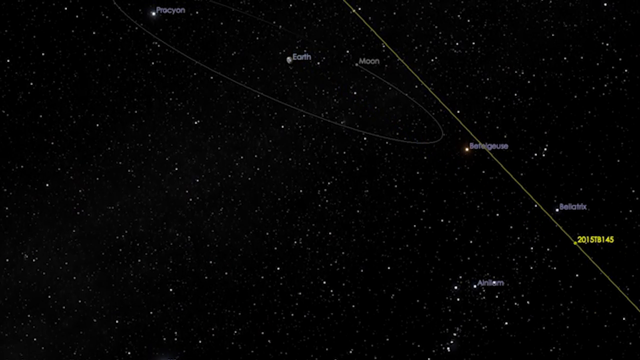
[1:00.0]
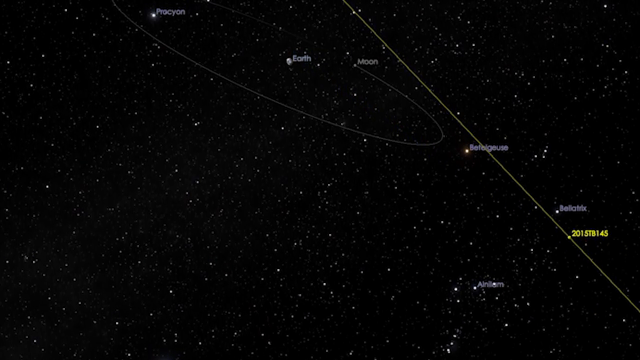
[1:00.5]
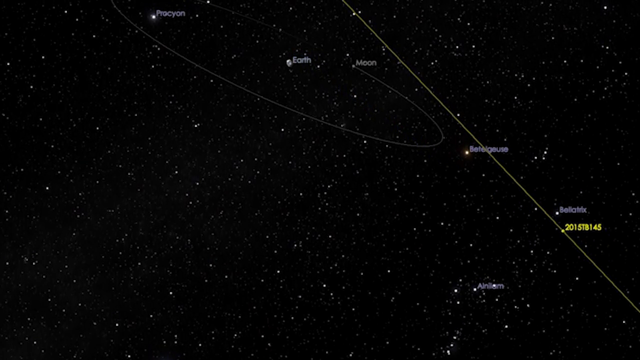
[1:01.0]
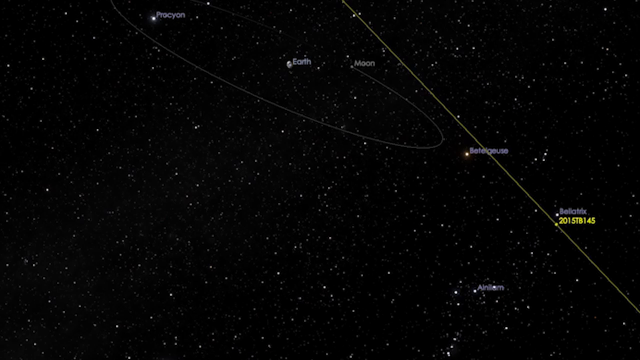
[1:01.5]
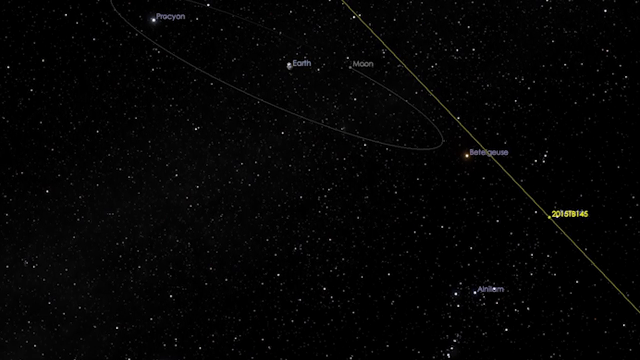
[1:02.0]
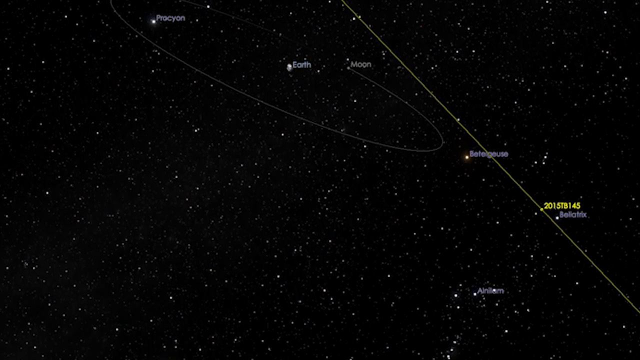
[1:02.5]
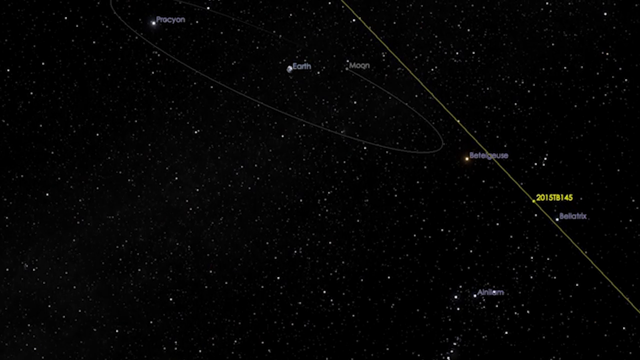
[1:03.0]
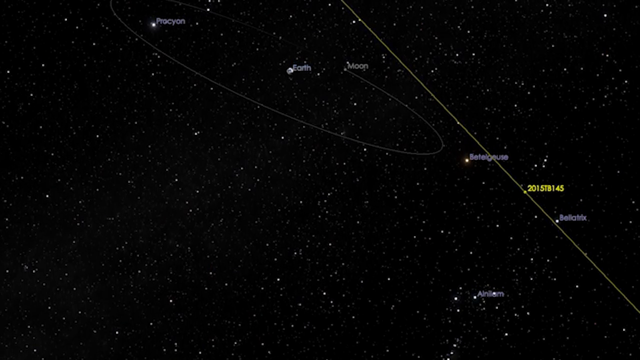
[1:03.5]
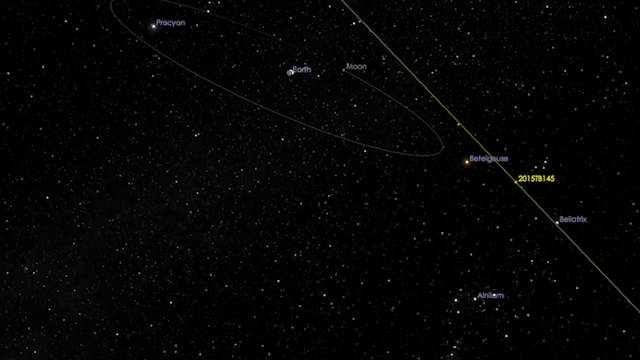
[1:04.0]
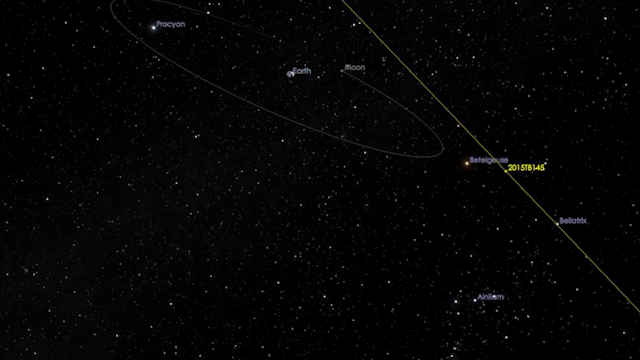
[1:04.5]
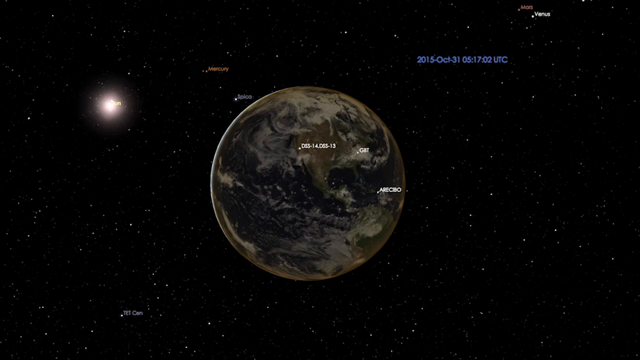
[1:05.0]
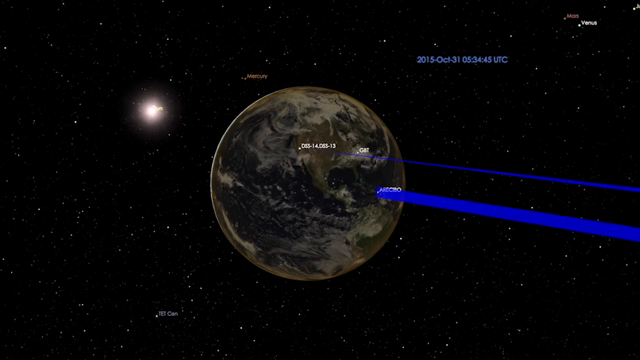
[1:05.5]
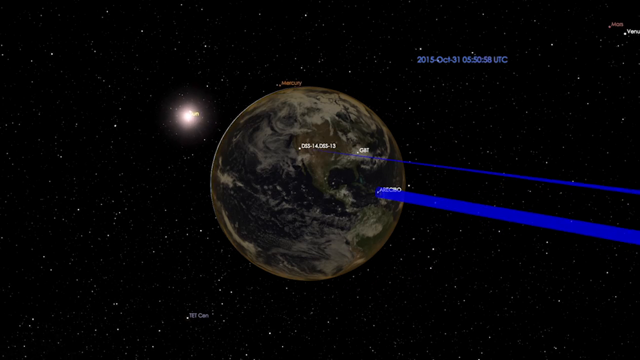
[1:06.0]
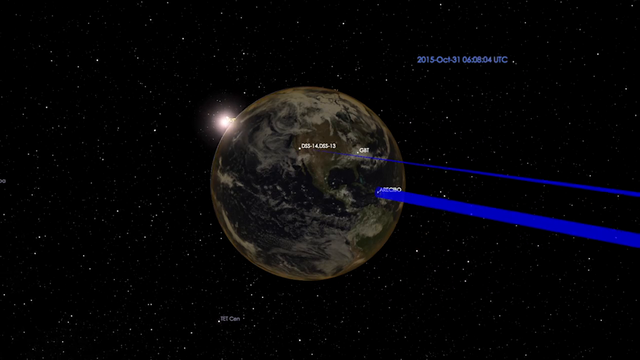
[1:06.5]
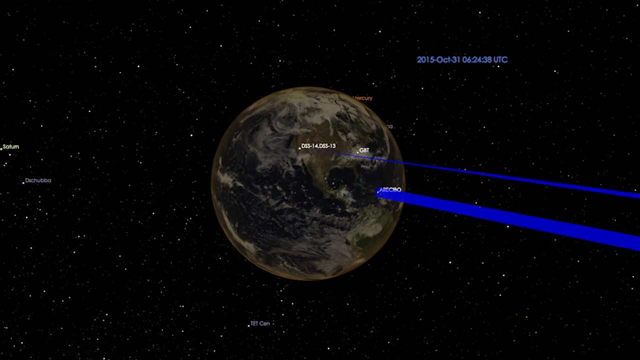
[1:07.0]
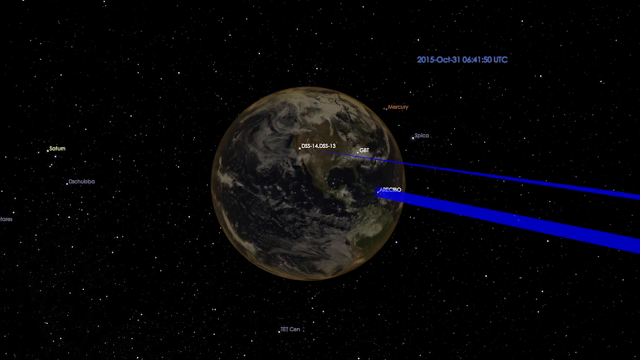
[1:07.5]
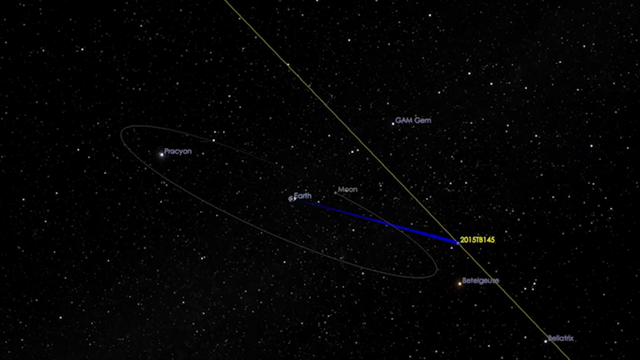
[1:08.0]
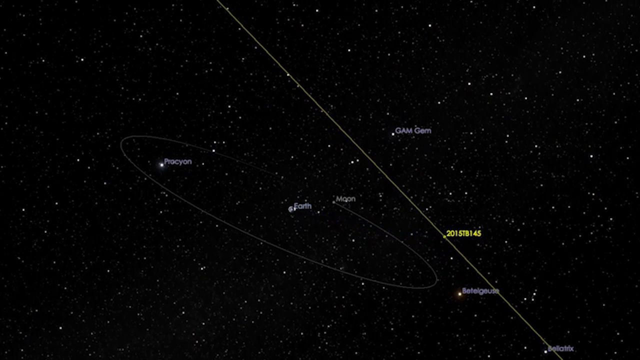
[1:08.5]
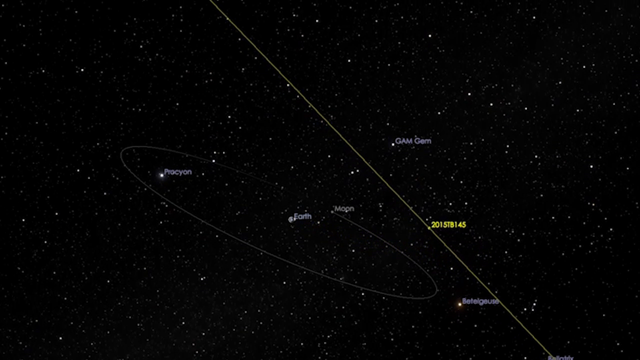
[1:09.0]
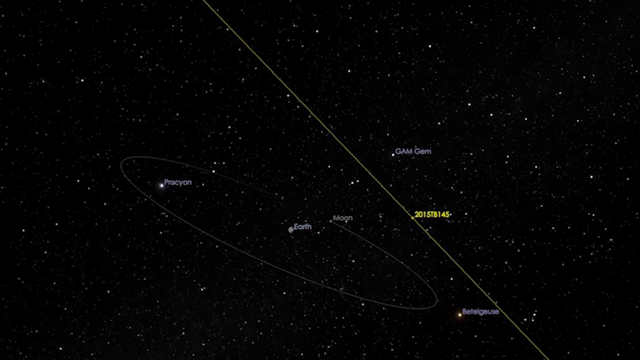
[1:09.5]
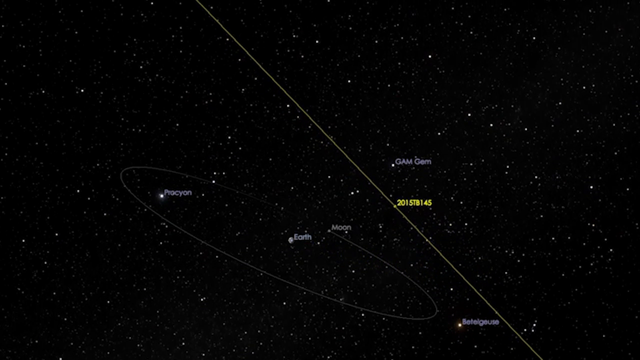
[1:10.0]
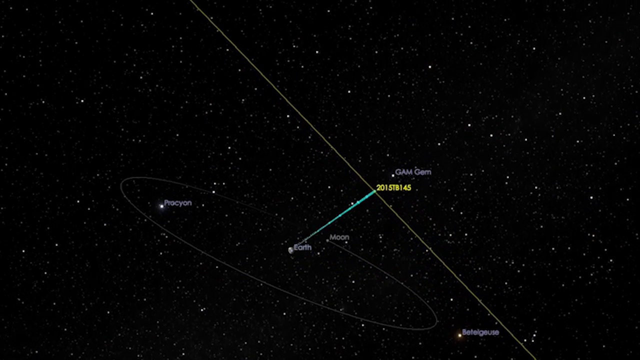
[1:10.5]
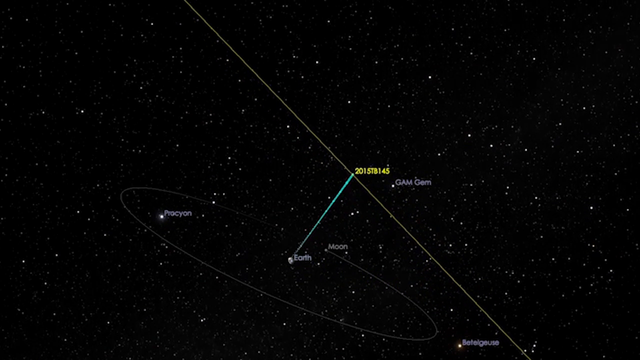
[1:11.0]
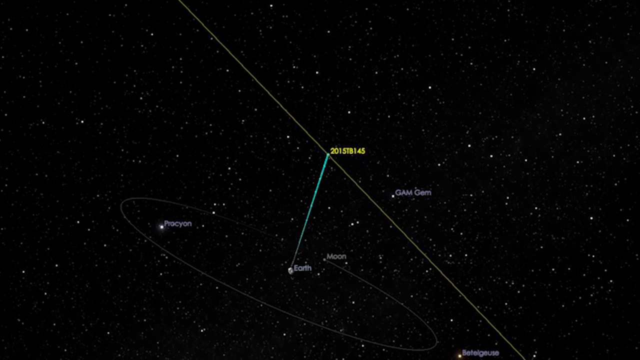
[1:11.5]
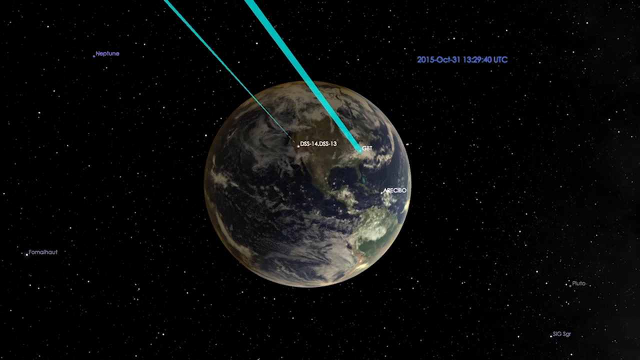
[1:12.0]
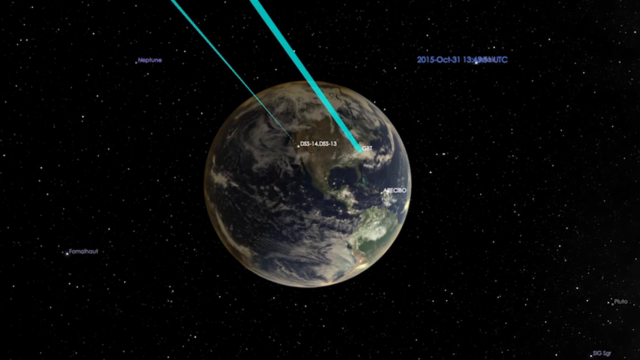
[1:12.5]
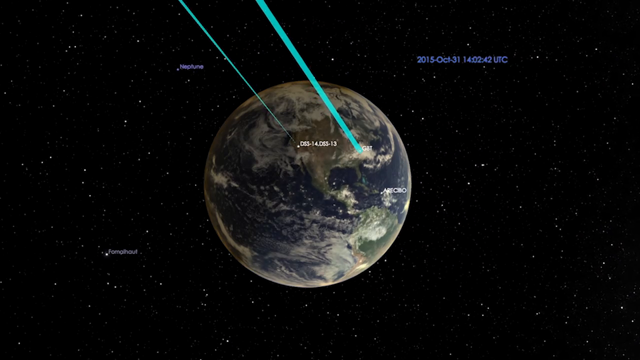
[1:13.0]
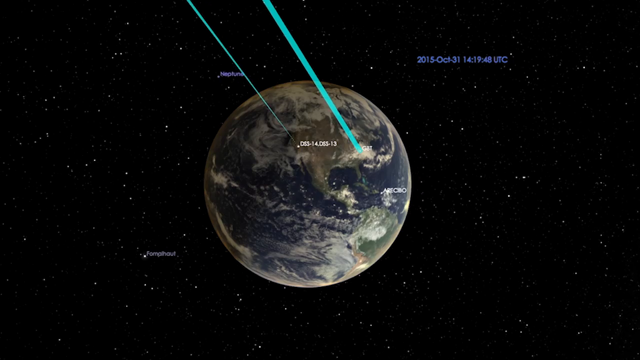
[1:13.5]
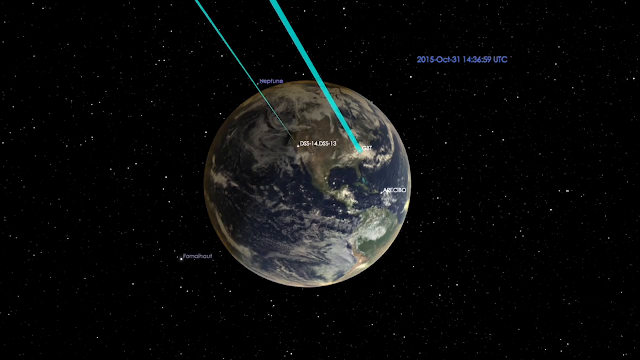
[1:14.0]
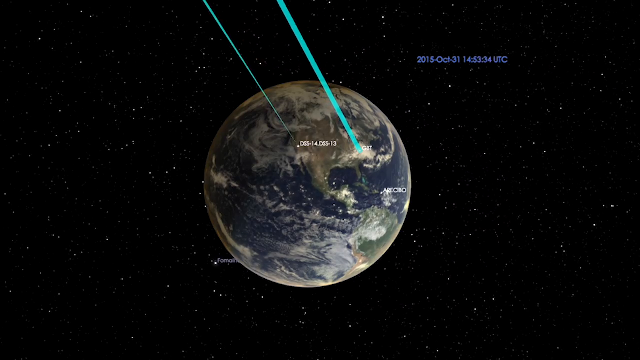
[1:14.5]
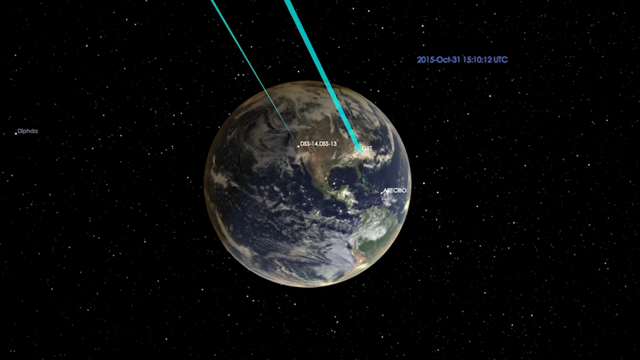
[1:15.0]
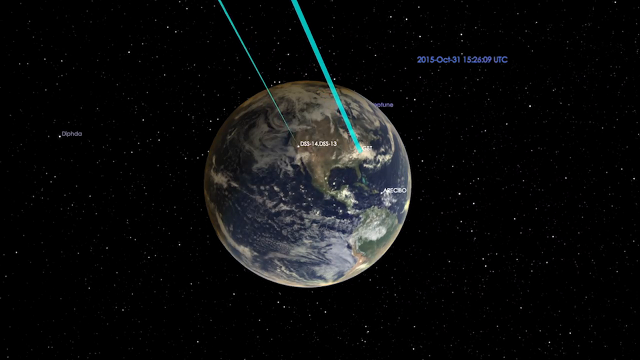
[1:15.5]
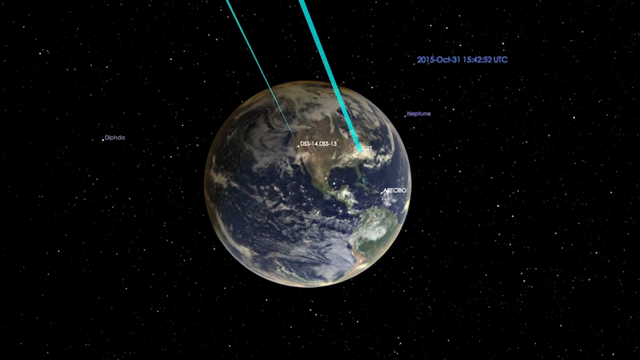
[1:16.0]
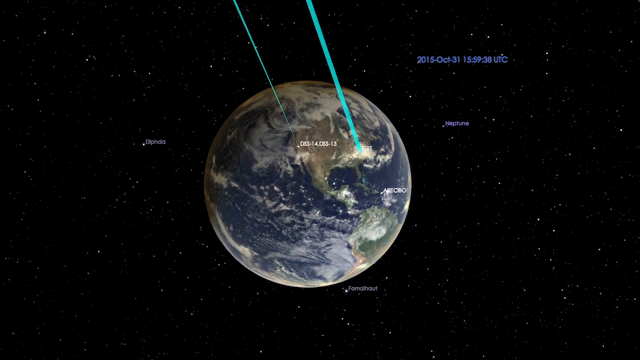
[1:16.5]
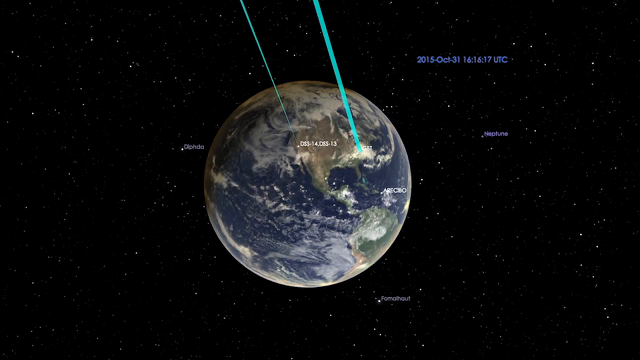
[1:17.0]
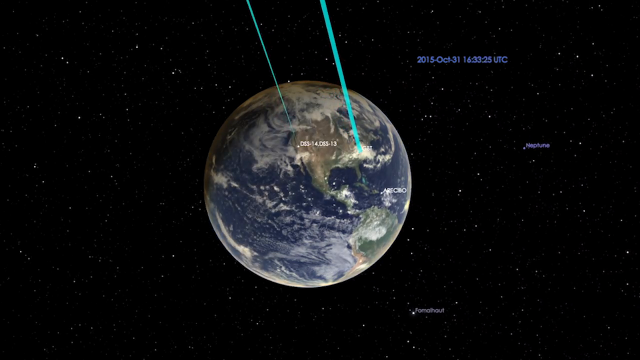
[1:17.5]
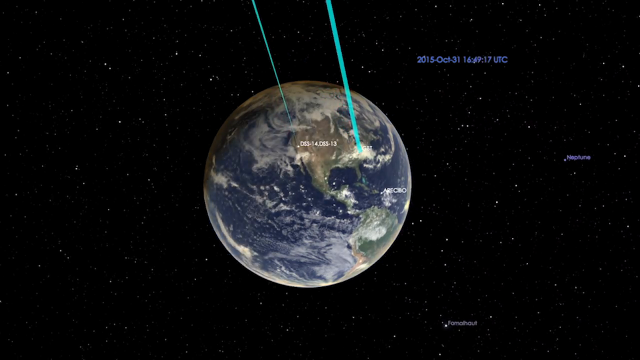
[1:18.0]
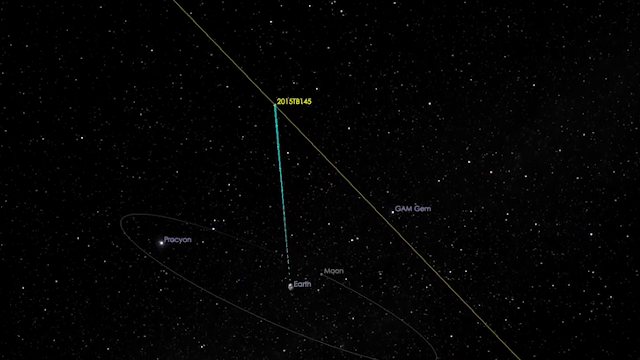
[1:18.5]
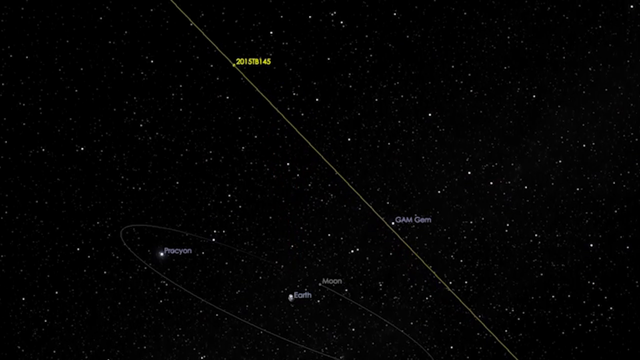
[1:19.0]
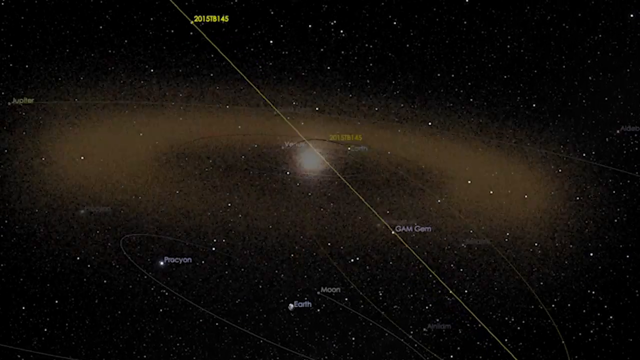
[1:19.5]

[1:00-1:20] An object, possibly the Earth or possibly the asteroid, moves down the path, and different angles show radar tracking systems locking onto the asteroid's movement. One image shows the Earth with radar-type signals being transmitted out, another shows what appears to be the asteroid with radar signals being received, and another shows the pathway itself along with what looks like a representation of how the signal is used to track the asteroid.